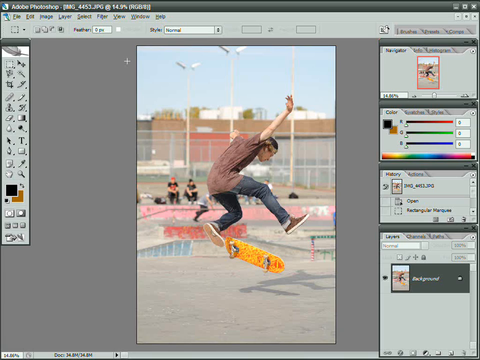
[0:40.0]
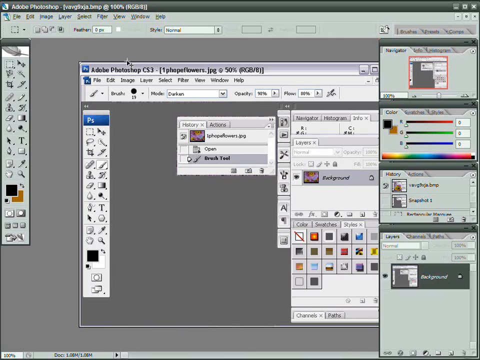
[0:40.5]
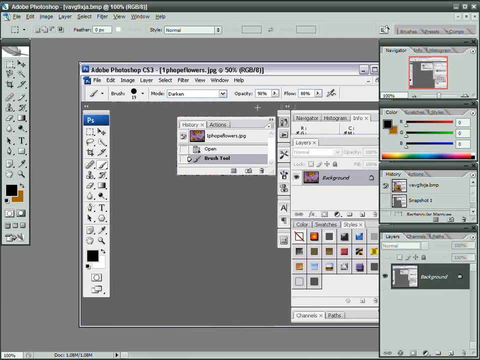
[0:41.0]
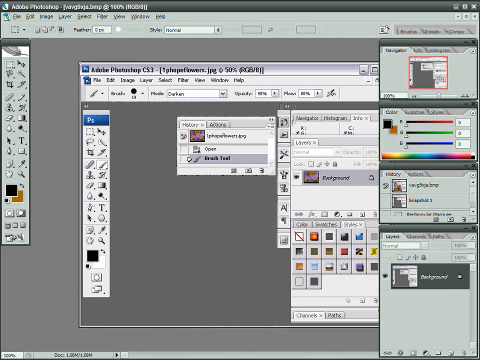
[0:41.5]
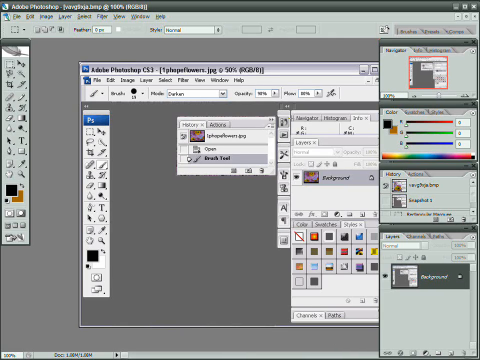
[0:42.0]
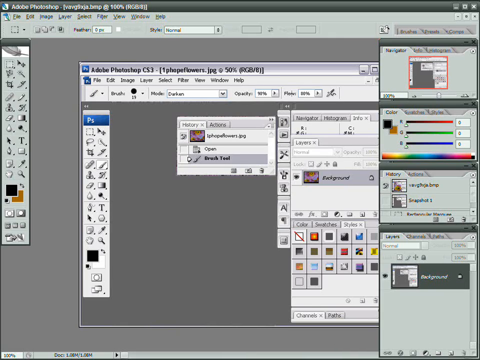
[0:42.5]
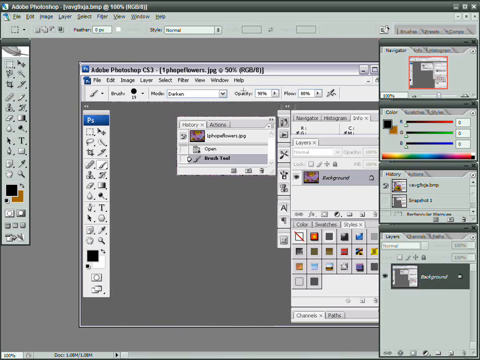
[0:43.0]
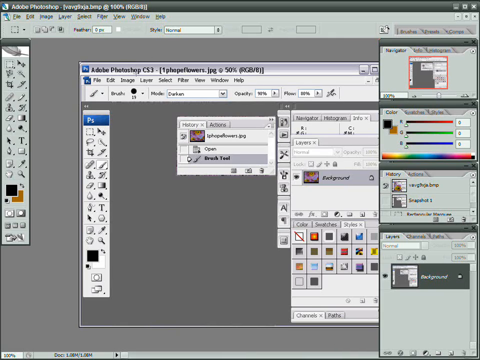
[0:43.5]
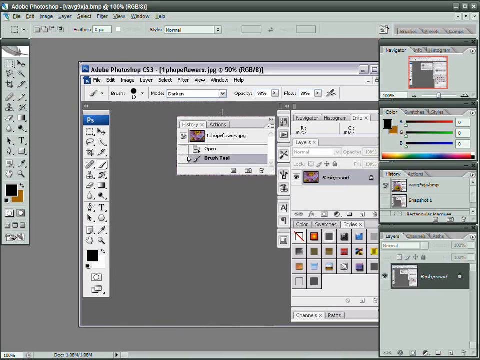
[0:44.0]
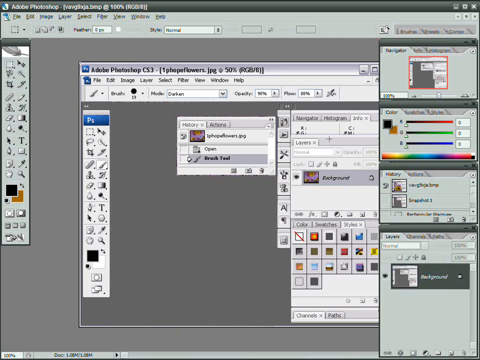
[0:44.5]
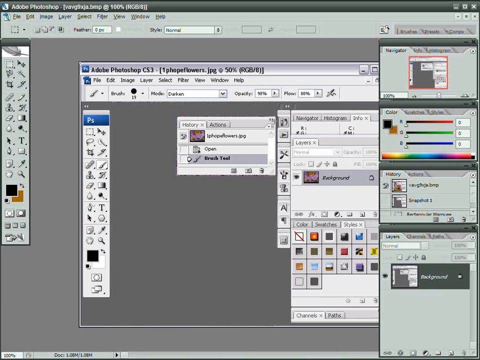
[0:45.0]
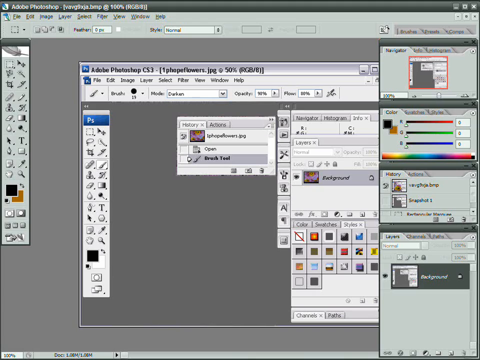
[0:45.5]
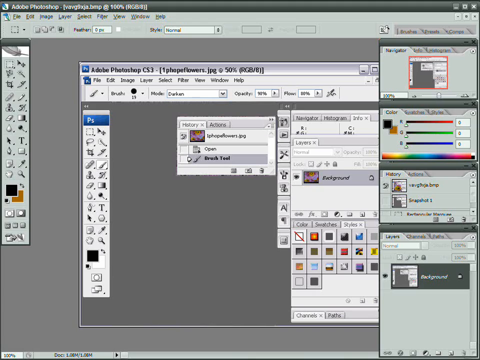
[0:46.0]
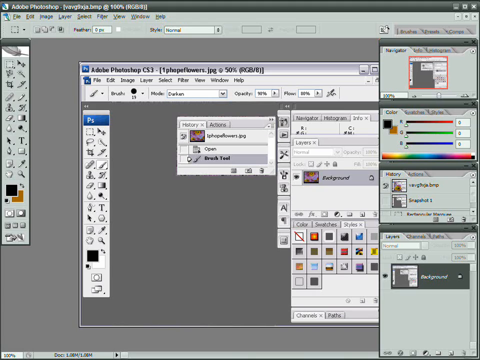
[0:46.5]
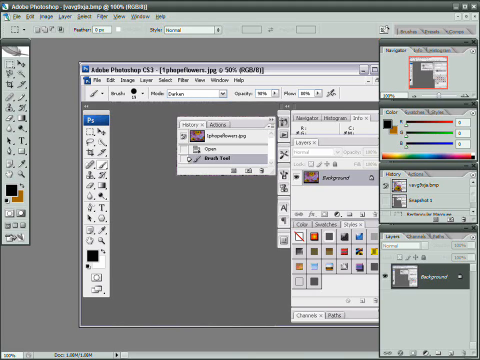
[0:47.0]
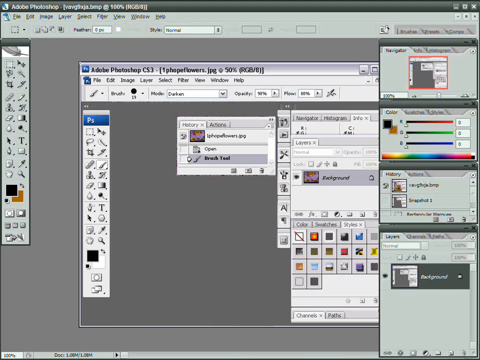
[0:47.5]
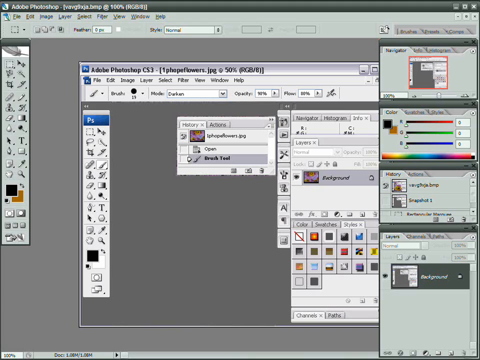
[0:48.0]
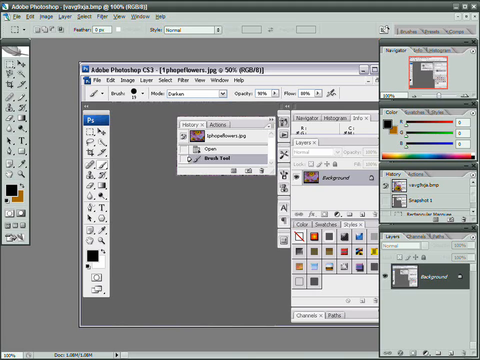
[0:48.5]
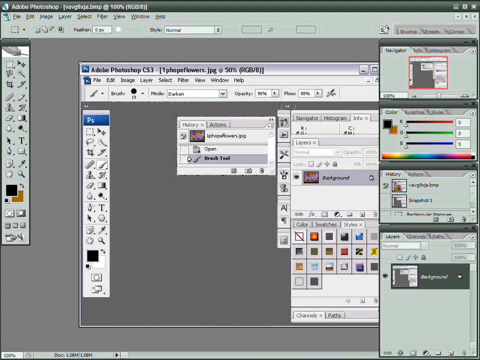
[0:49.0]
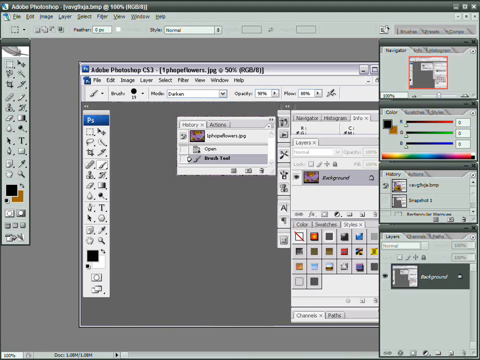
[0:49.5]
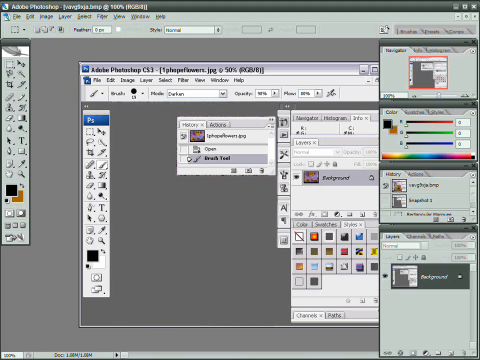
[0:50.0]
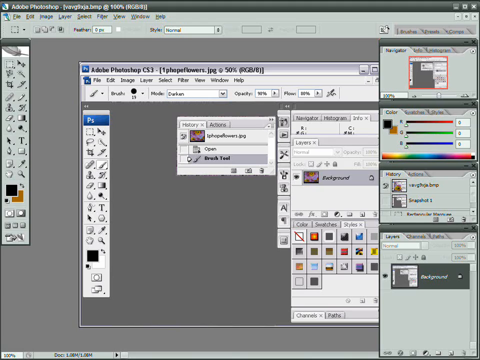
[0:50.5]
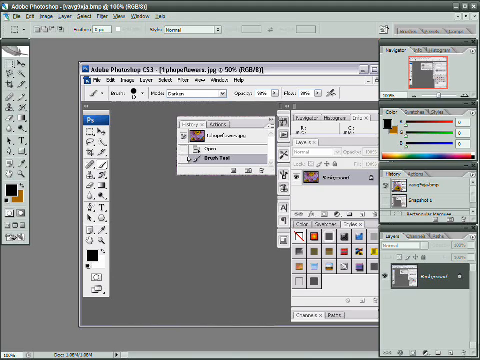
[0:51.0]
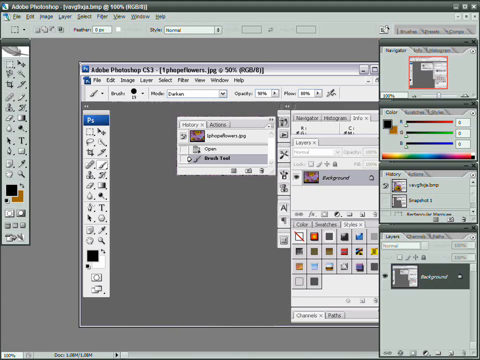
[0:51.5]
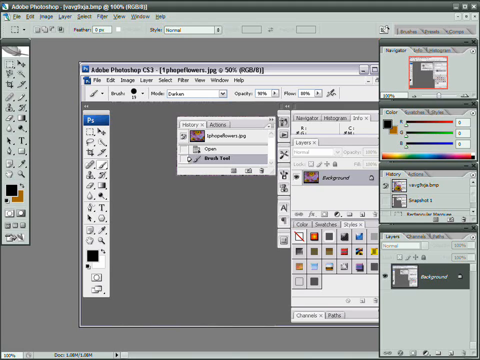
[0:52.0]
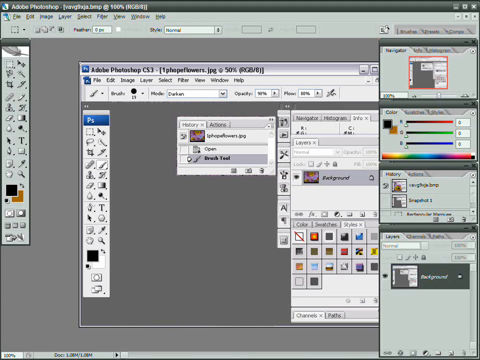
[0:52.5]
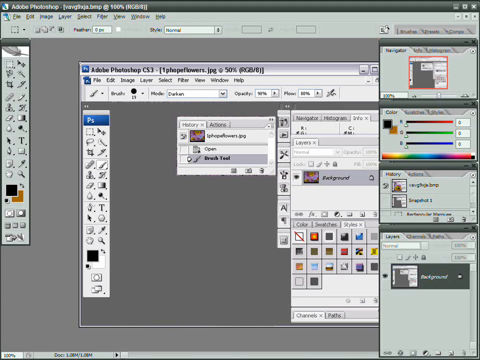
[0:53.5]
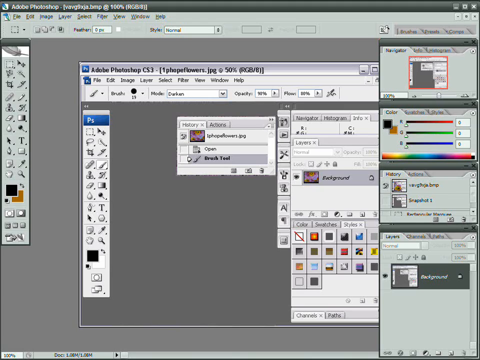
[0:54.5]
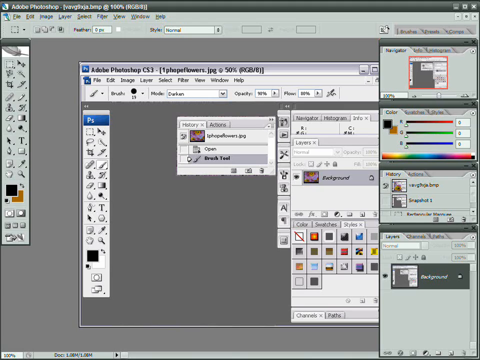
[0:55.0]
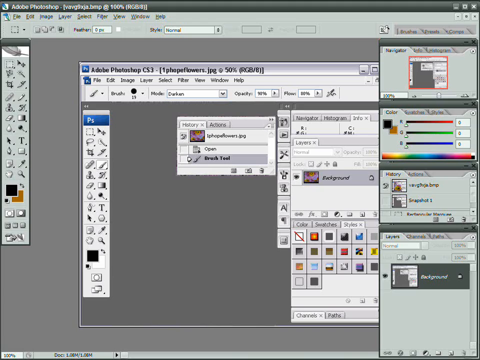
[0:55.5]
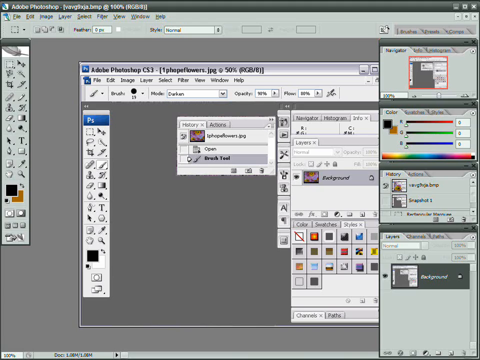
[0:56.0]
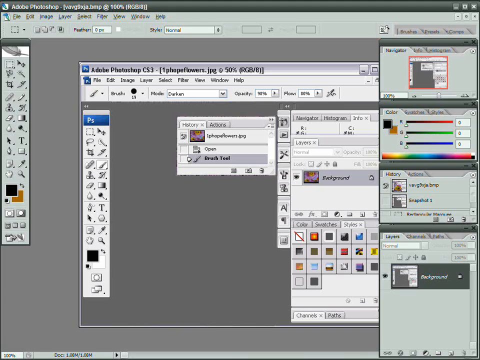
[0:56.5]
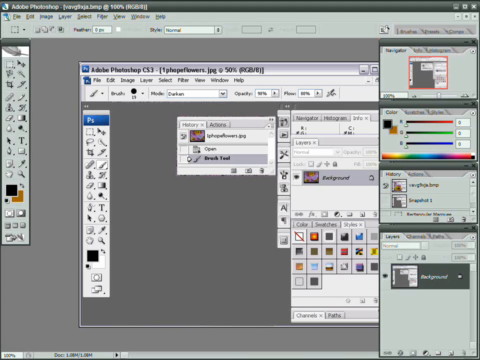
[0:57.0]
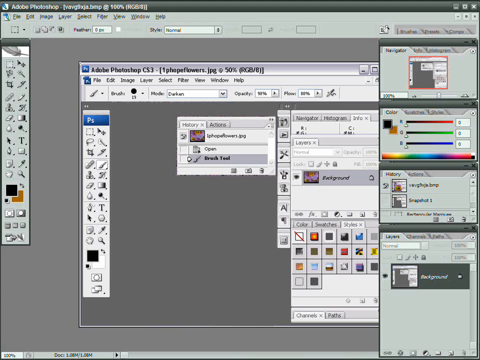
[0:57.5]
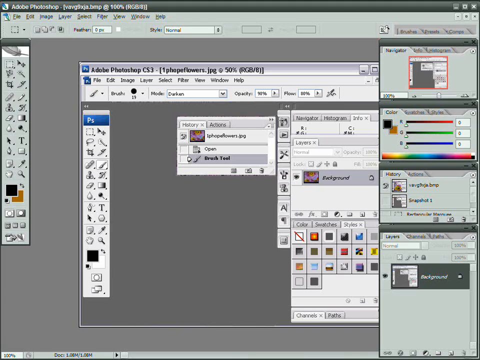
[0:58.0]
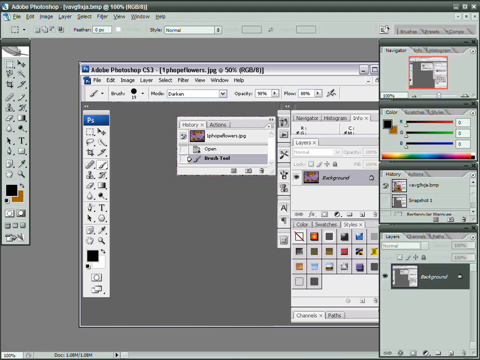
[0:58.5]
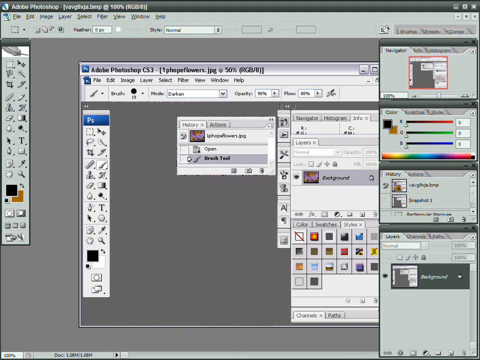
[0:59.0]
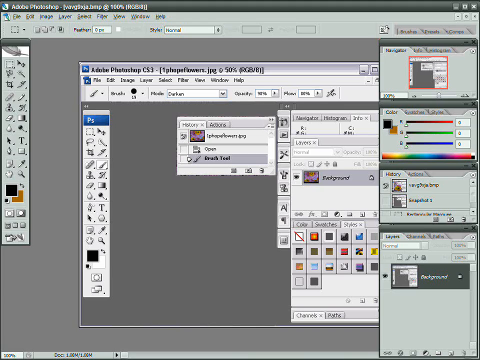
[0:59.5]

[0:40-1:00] The Photoshop working space is shown, with watermarks visible above on the image. Apparently a mouse pointer is being used to edit the image of a boy on a skateboard in the air.